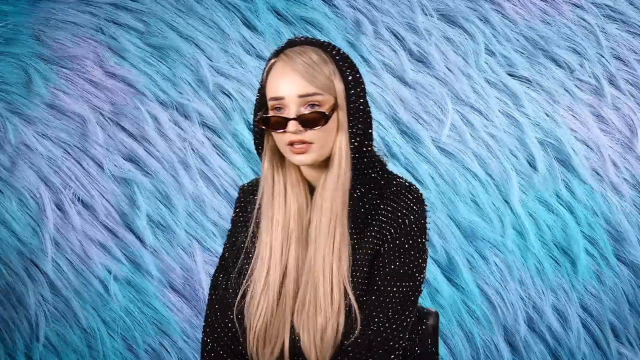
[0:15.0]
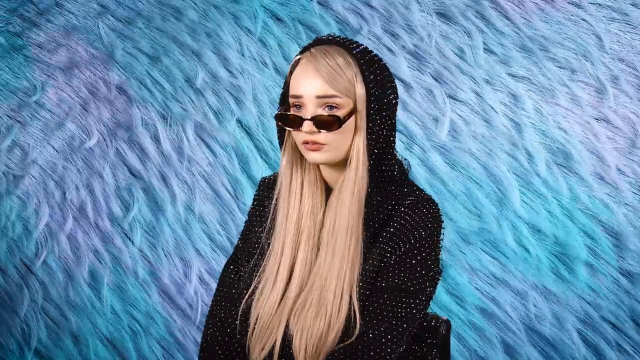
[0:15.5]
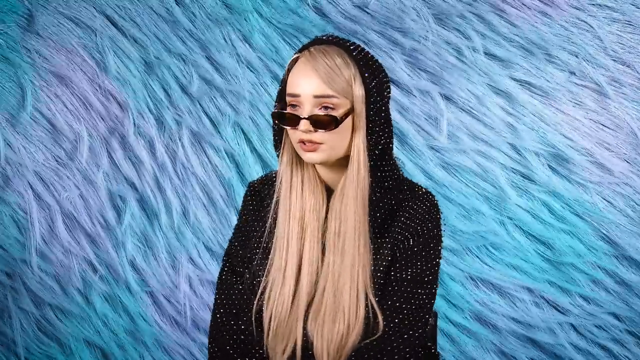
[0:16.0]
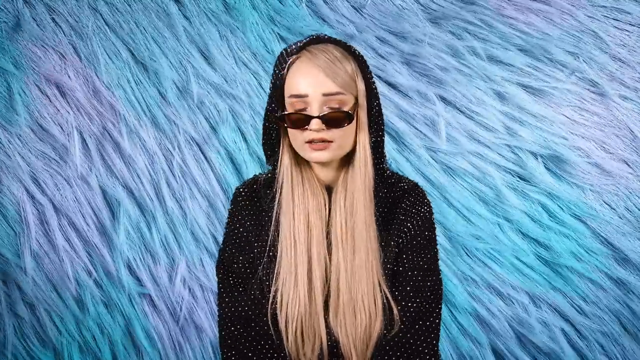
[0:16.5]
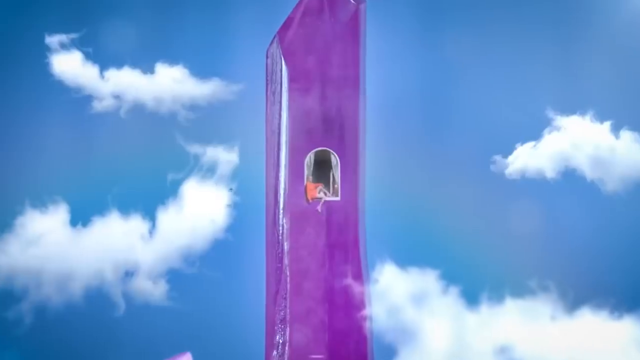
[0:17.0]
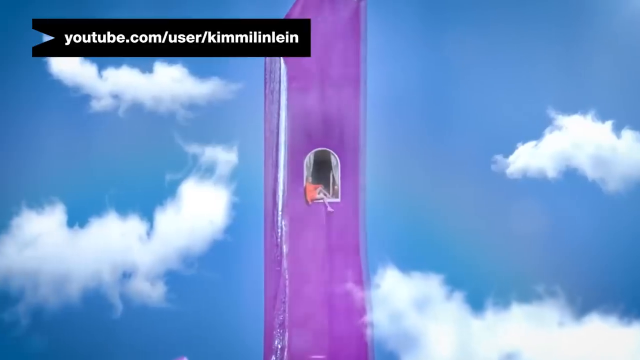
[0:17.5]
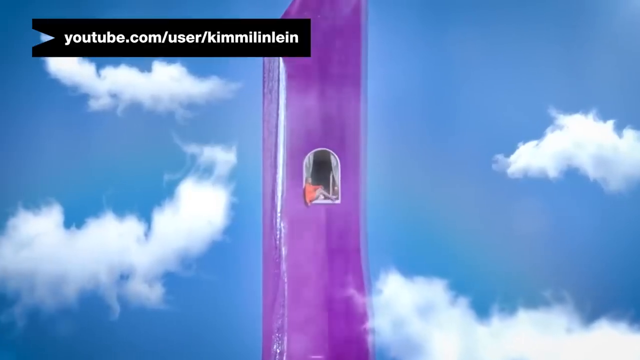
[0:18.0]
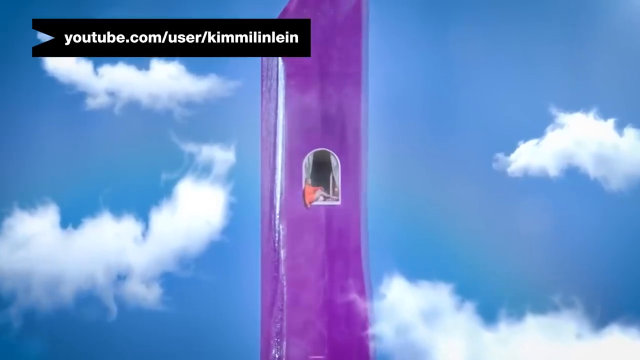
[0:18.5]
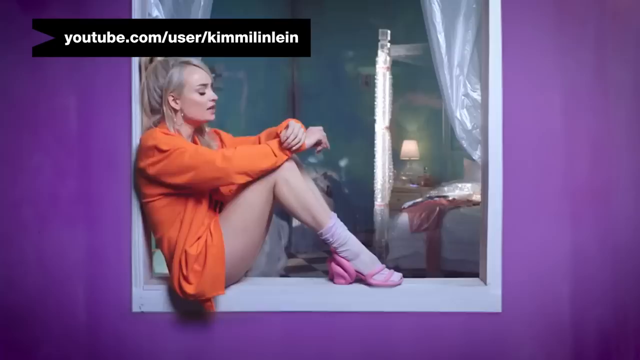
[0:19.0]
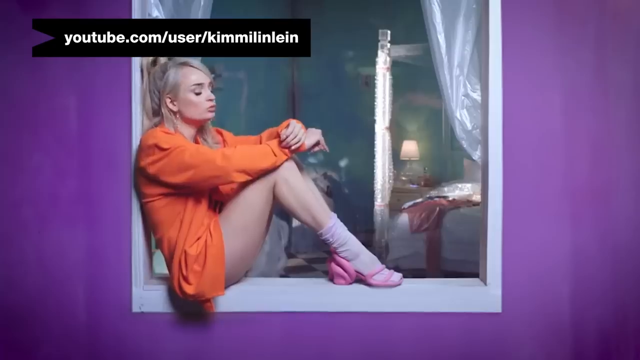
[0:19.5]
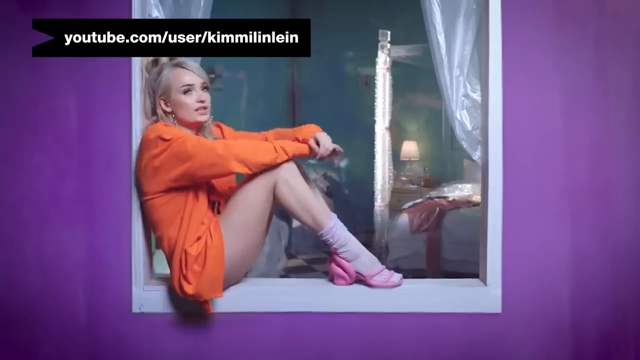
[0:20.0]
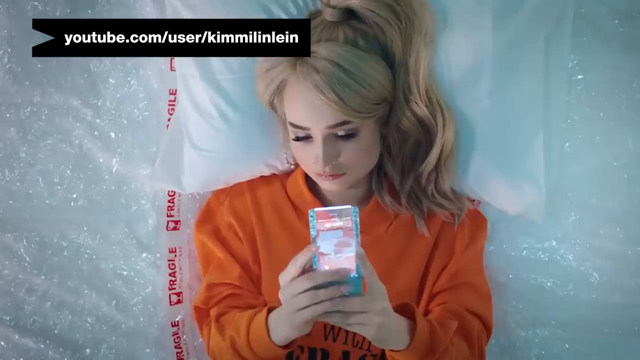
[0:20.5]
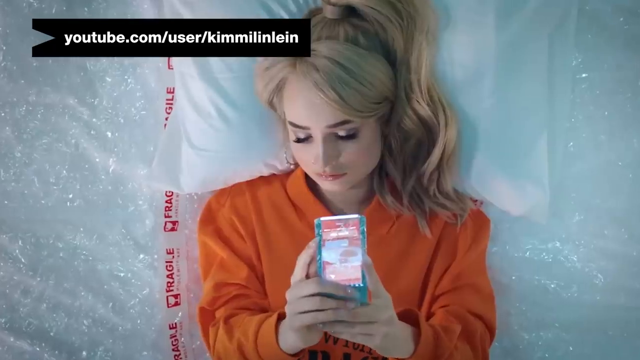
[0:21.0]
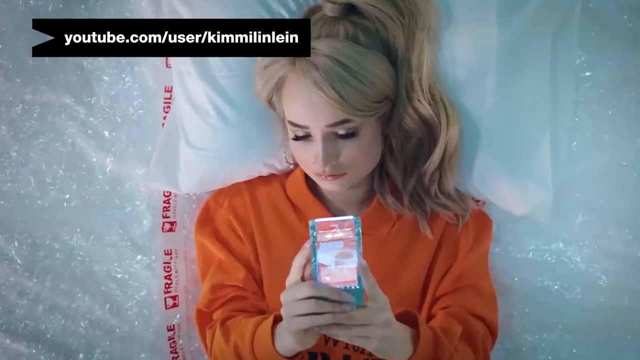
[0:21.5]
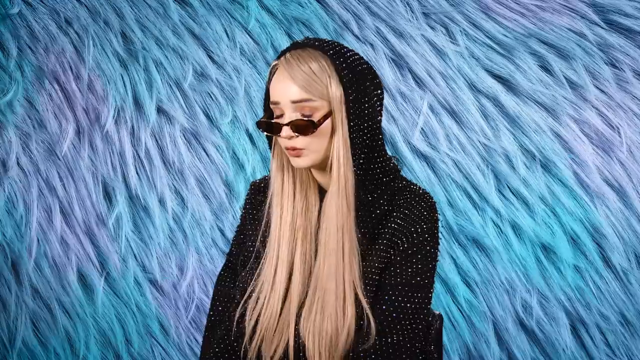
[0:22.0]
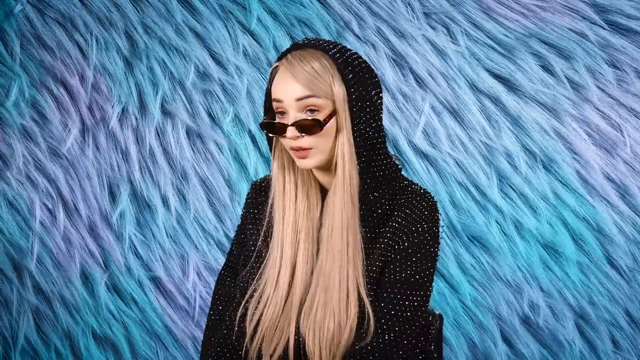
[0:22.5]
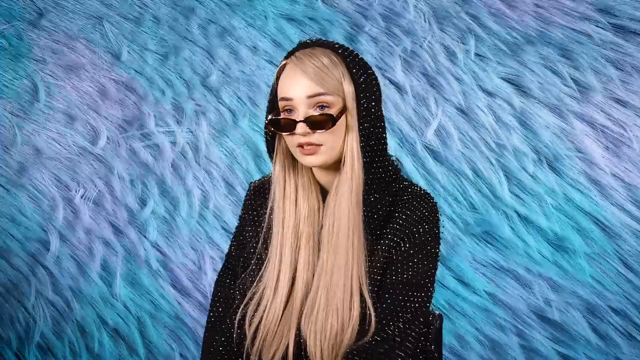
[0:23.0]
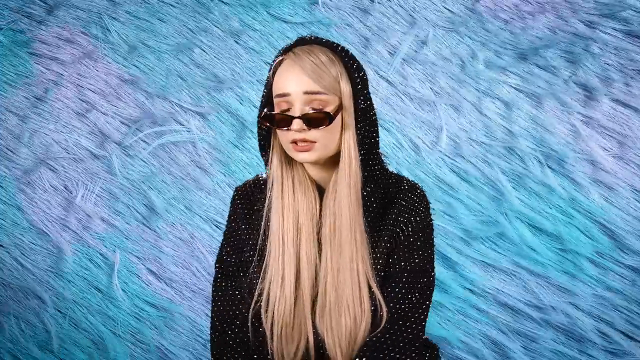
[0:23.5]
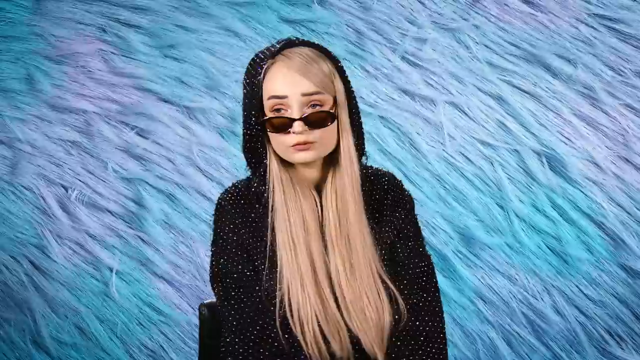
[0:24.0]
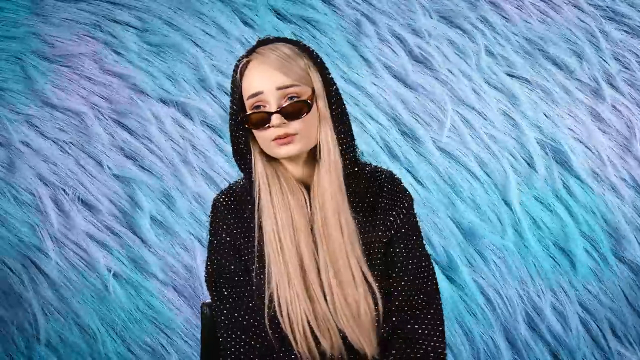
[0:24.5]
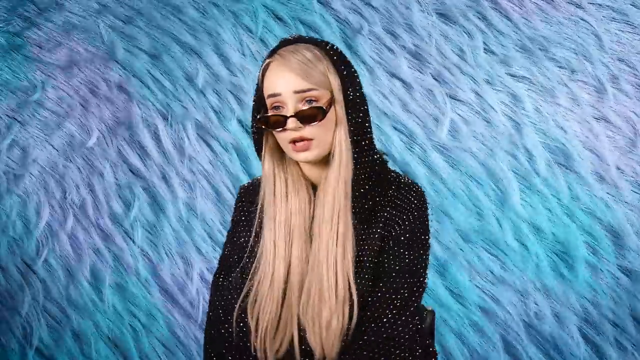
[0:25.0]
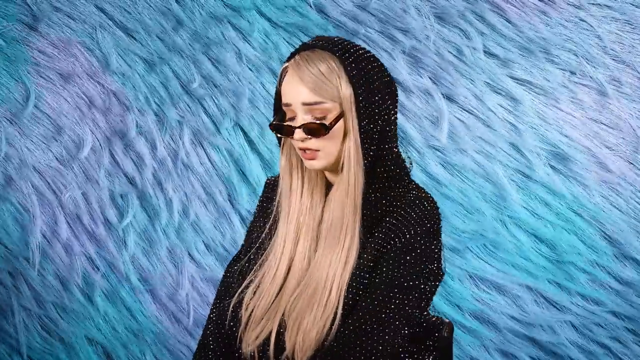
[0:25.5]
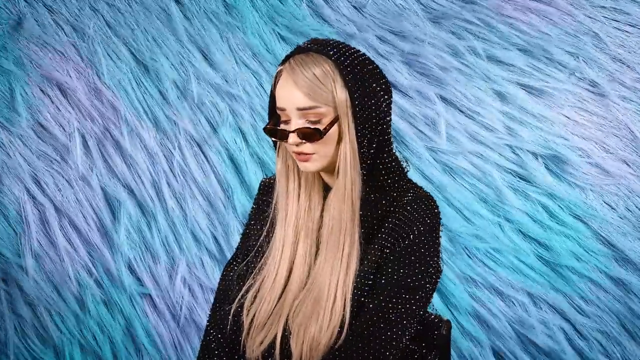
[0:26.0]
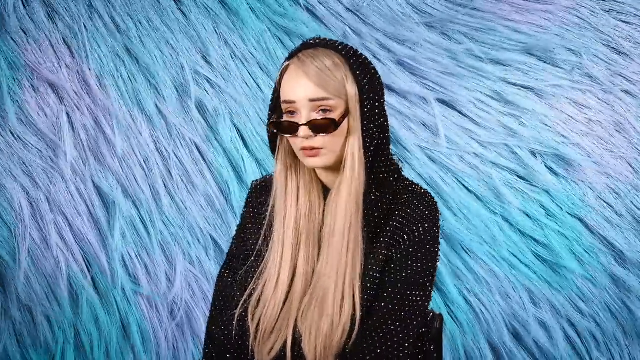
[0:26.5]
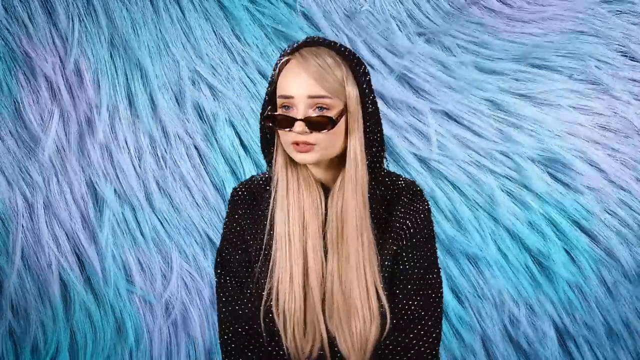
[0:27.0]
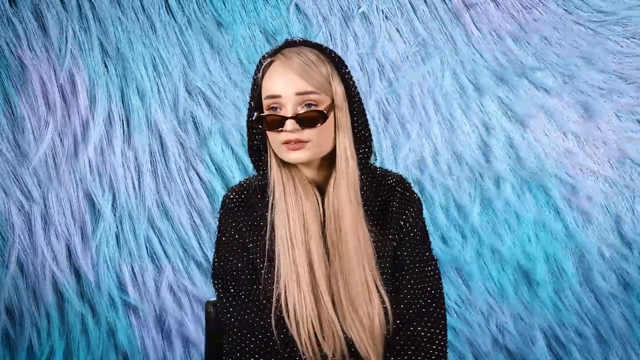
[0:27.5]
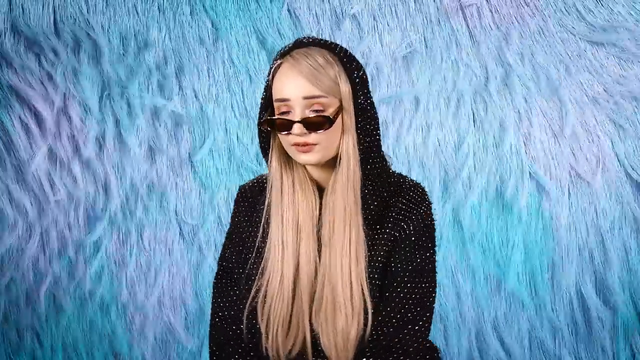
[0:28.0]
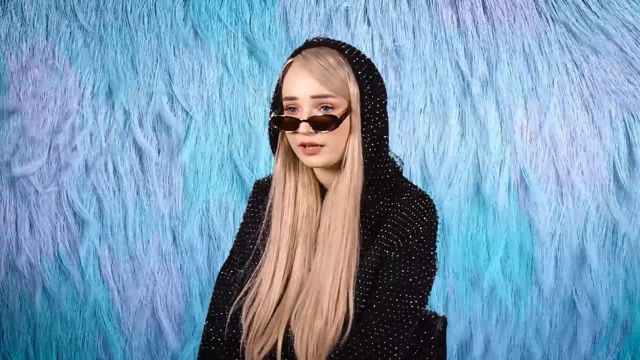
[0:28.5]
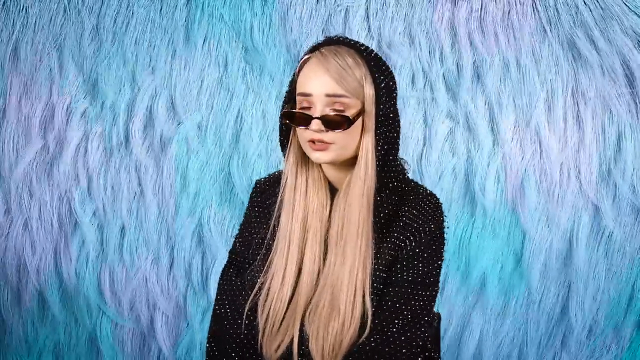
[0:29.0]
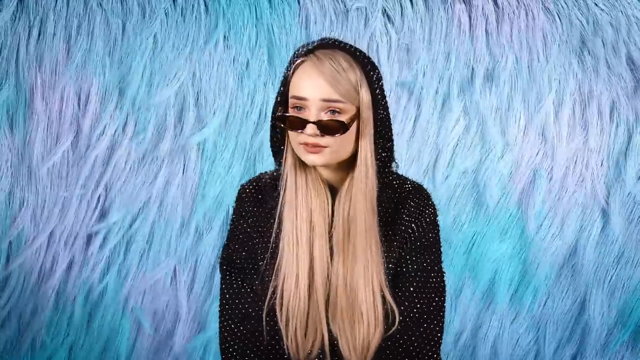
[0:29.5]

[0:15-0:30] A light-skinned person with long blonde hair and brown sunglasses is interviewed, wearing a black jacket with sequins and sitting on a black chair. The background is blue and purple fake fur that moves as if wind is blowing on it. Interspersed with the shots of the person talking are clips of the same person doing other things, possibly from a music video: in some they are lying down, singing or dancing. Some clips show the person in a tower, sitting in the window, with sky and clouds in the background. Only one person is featured.